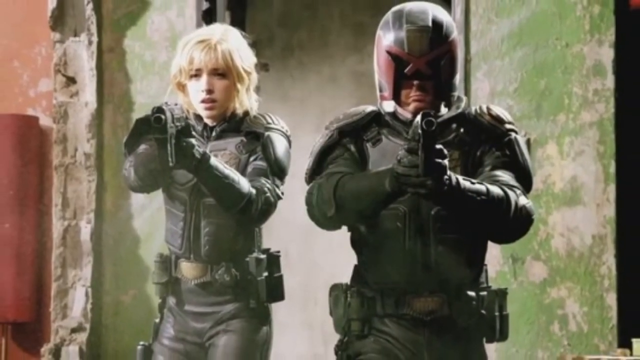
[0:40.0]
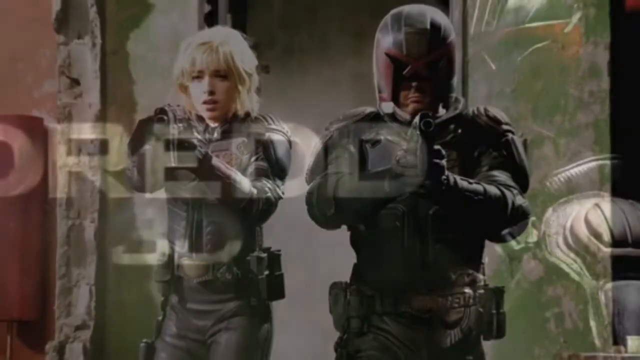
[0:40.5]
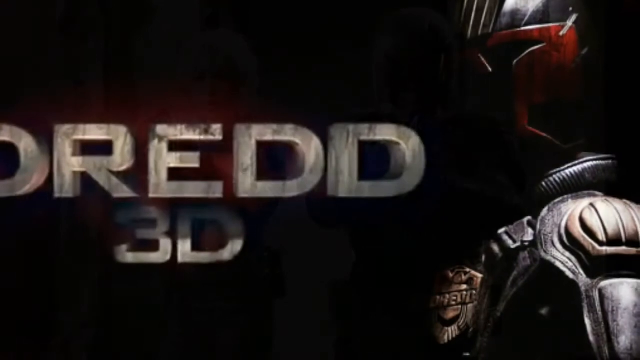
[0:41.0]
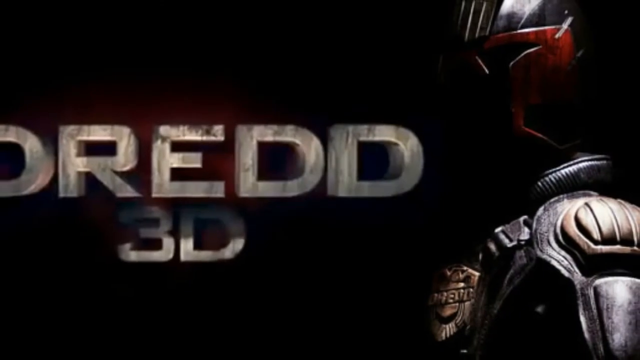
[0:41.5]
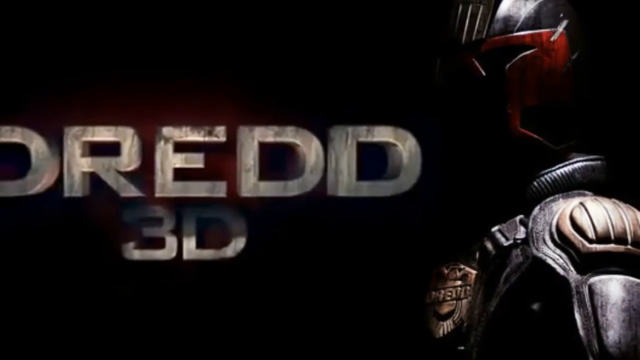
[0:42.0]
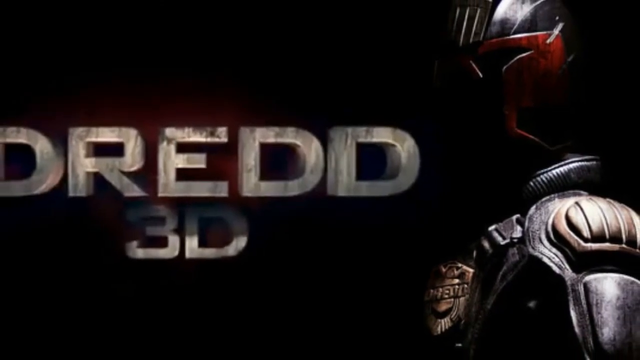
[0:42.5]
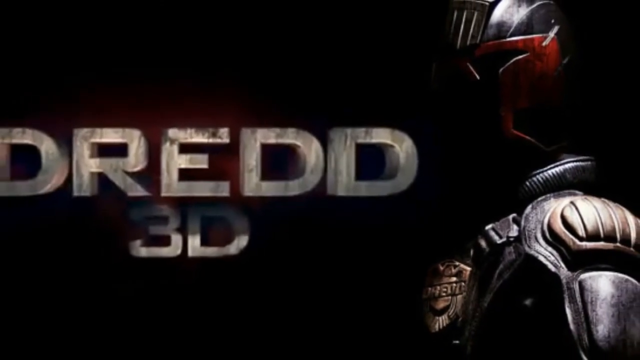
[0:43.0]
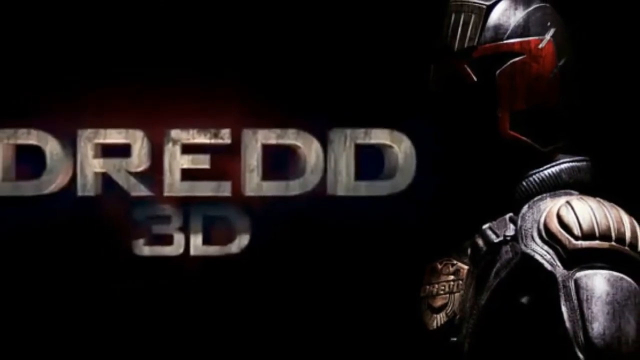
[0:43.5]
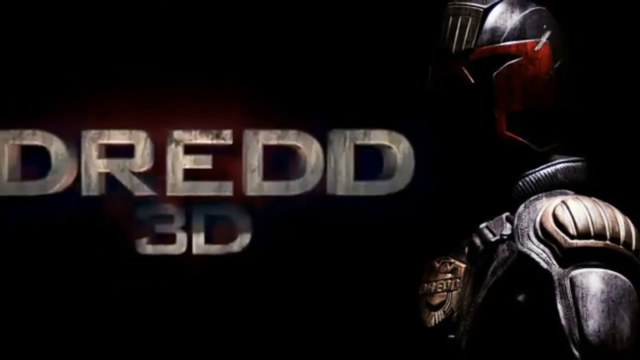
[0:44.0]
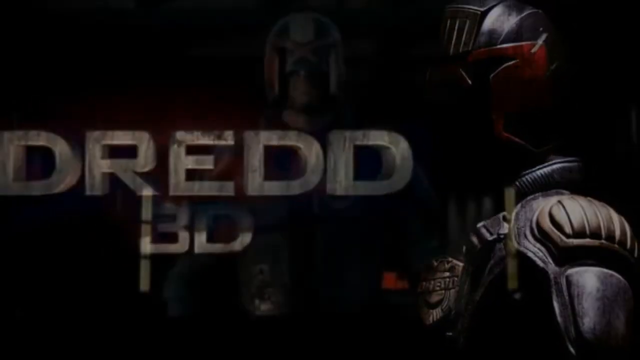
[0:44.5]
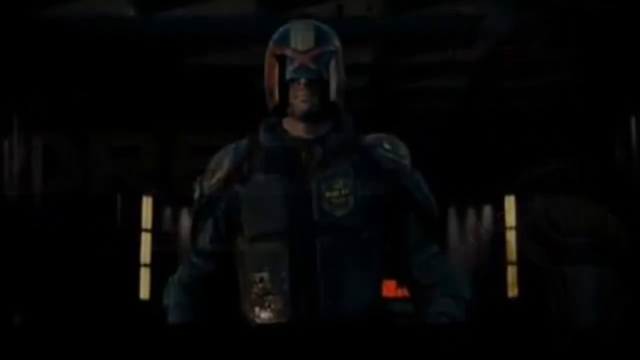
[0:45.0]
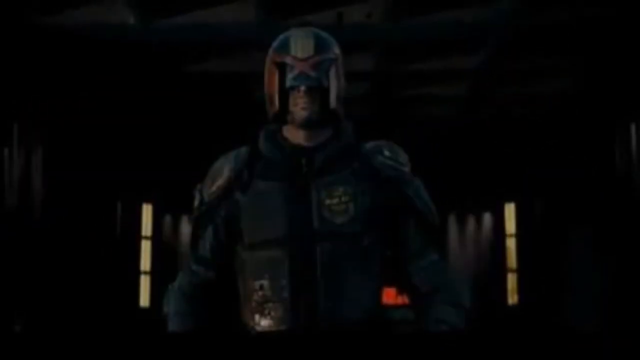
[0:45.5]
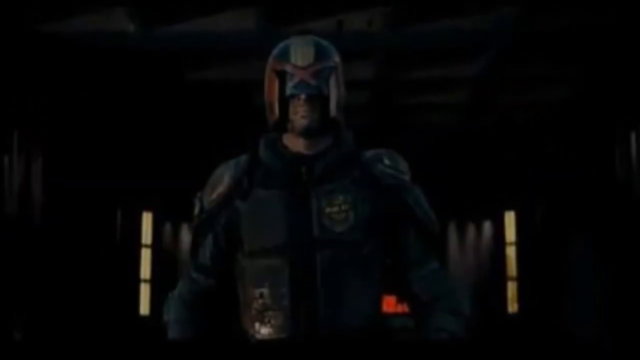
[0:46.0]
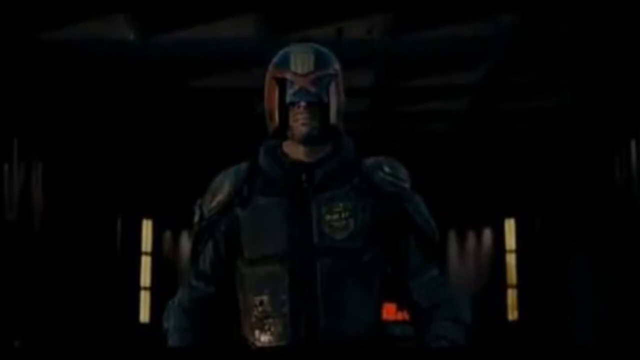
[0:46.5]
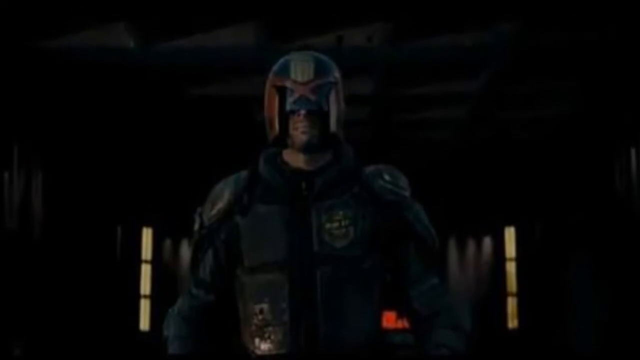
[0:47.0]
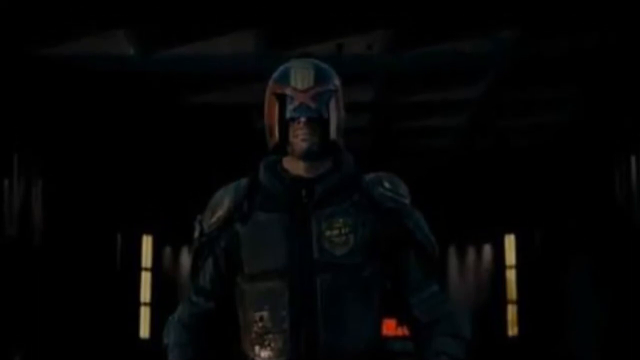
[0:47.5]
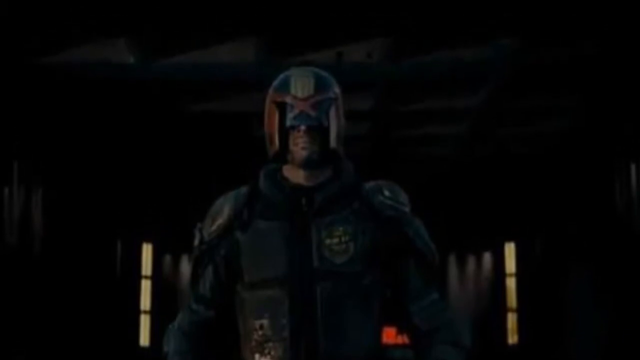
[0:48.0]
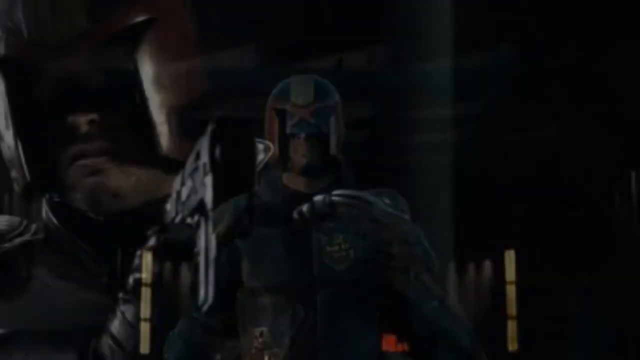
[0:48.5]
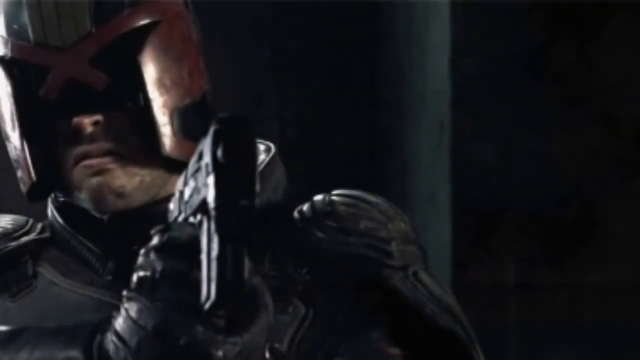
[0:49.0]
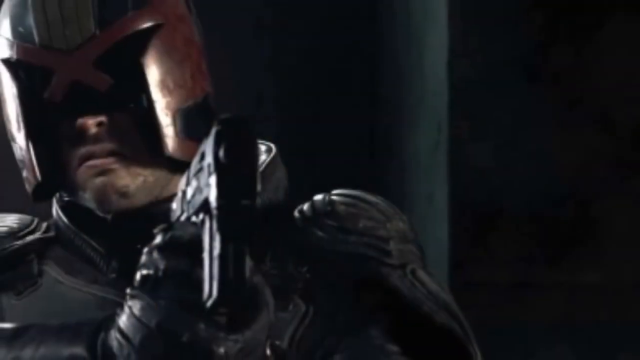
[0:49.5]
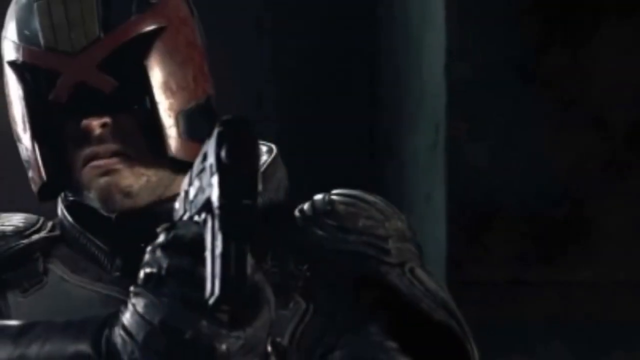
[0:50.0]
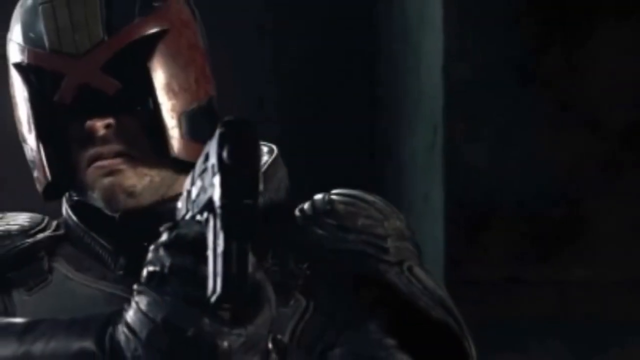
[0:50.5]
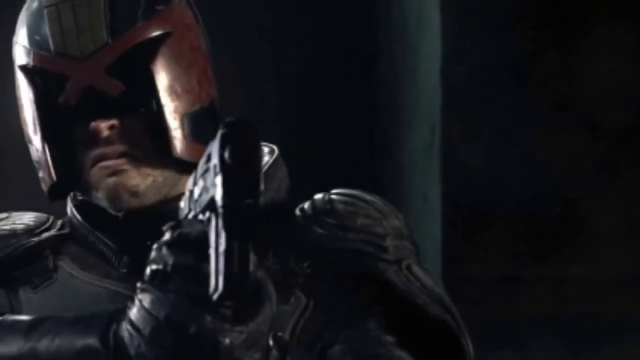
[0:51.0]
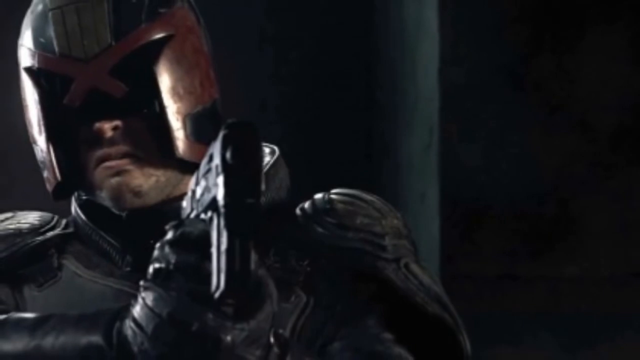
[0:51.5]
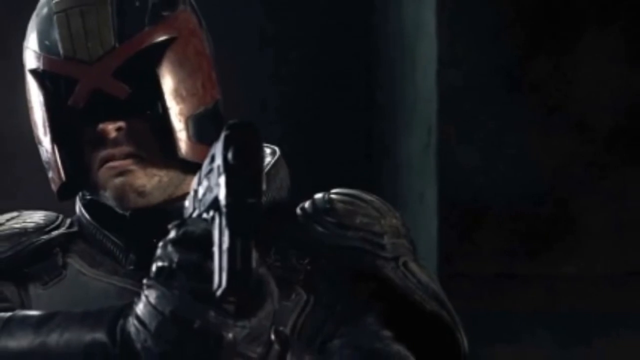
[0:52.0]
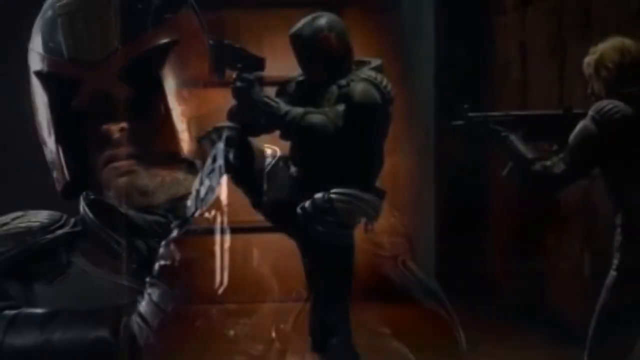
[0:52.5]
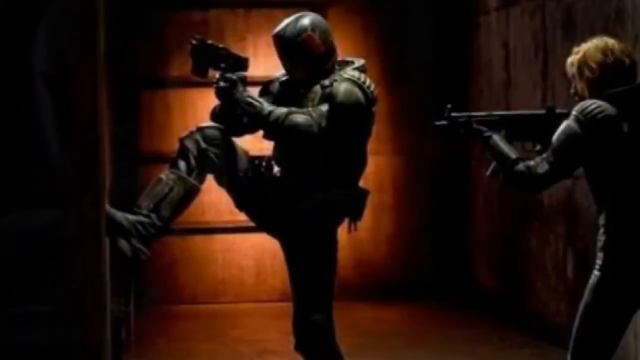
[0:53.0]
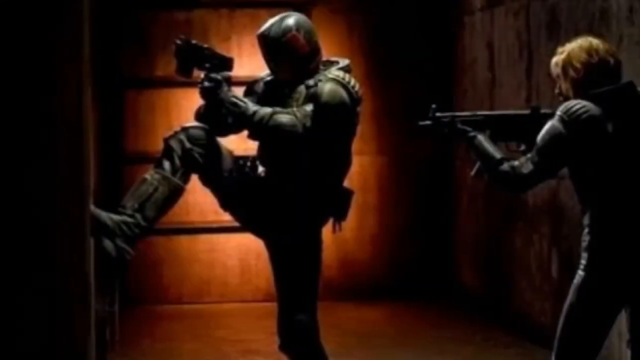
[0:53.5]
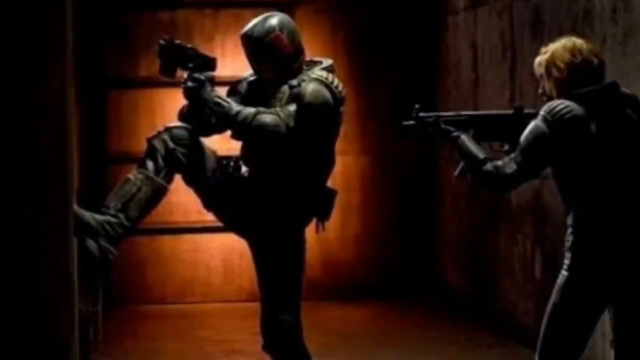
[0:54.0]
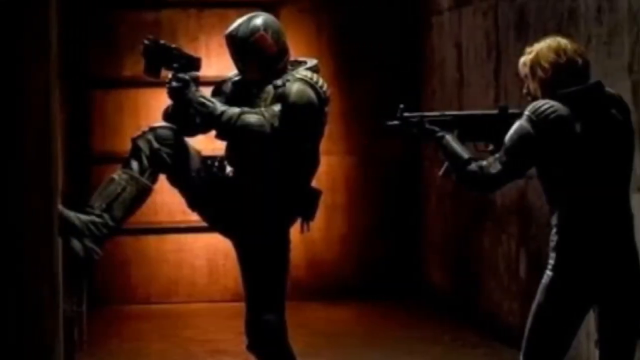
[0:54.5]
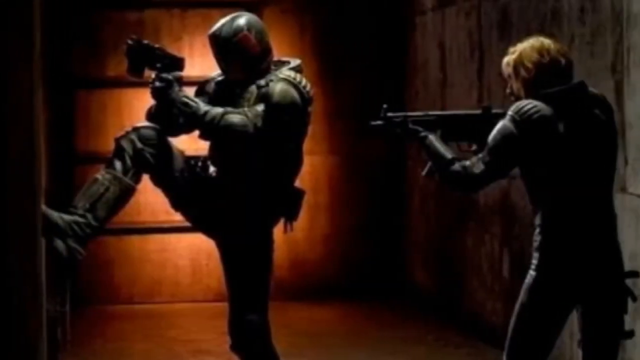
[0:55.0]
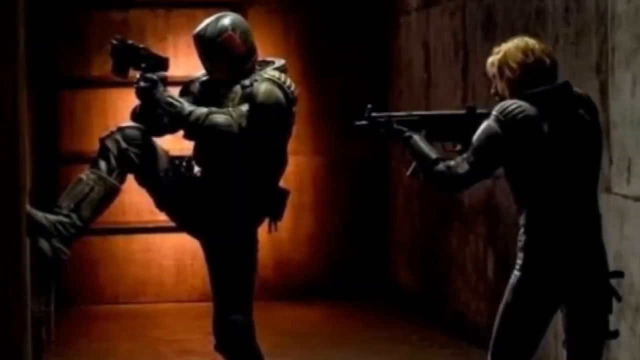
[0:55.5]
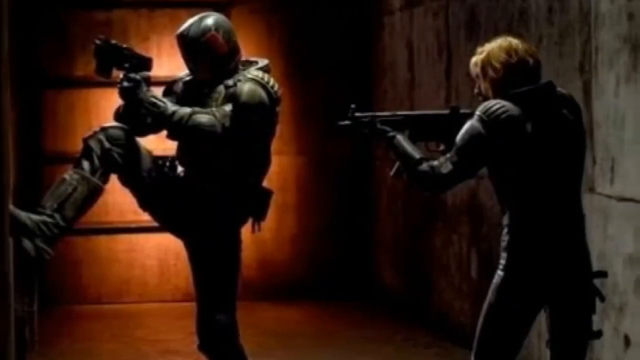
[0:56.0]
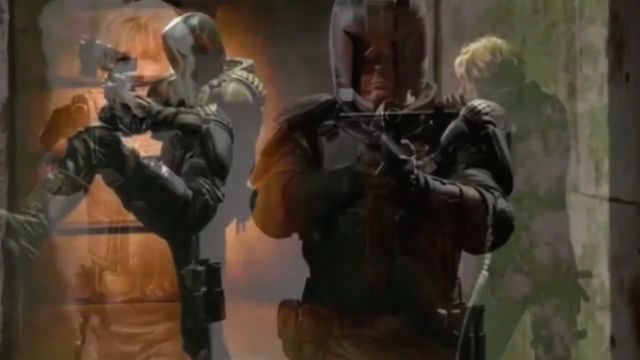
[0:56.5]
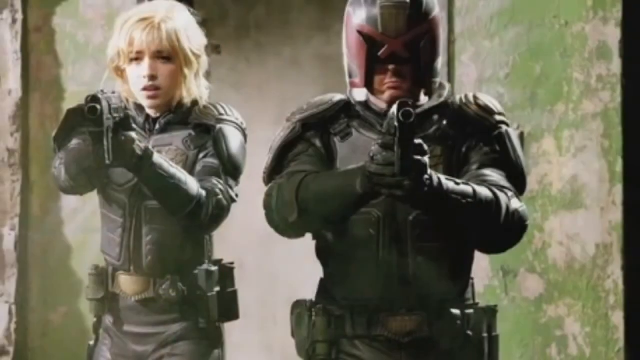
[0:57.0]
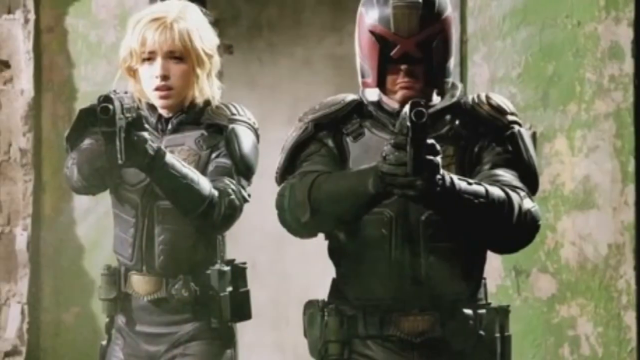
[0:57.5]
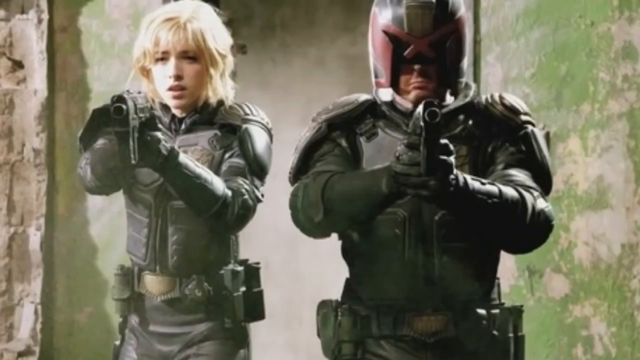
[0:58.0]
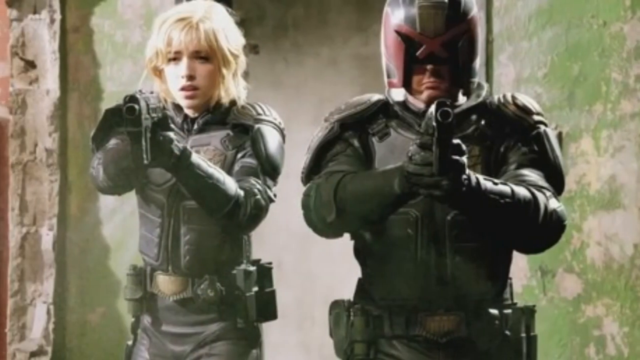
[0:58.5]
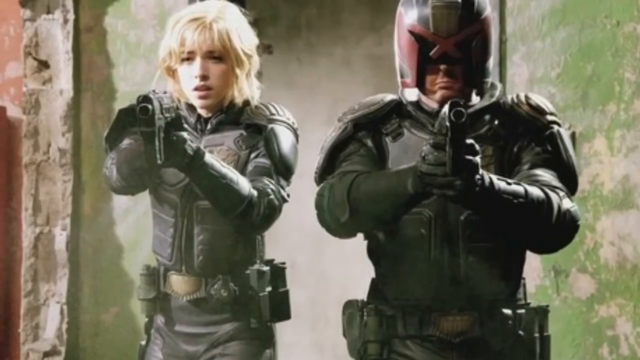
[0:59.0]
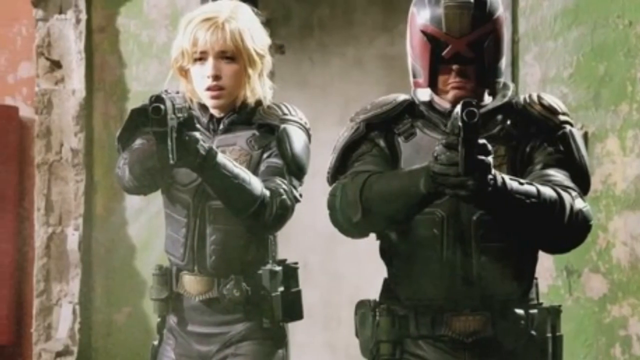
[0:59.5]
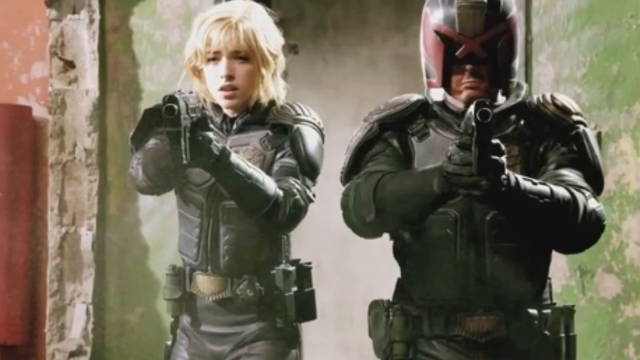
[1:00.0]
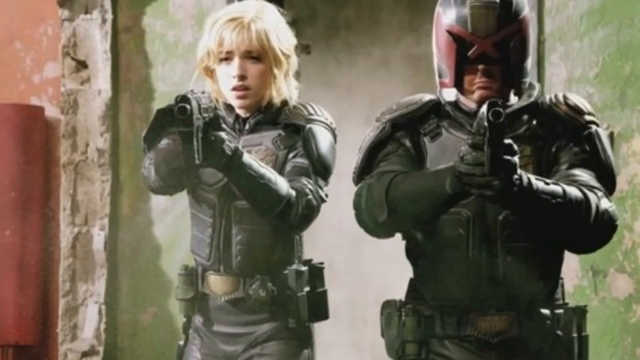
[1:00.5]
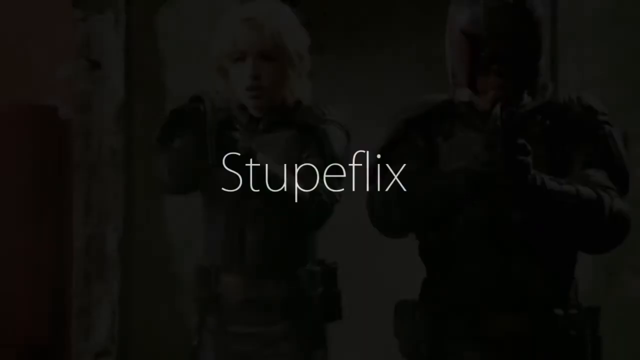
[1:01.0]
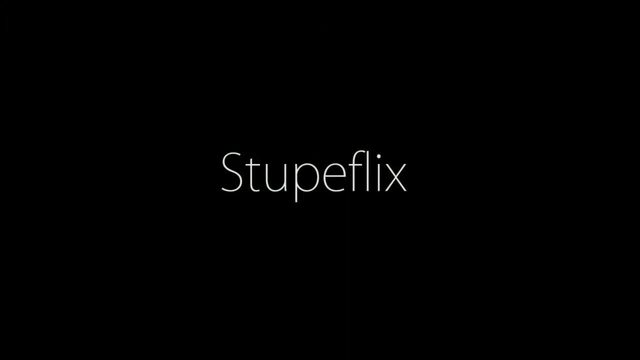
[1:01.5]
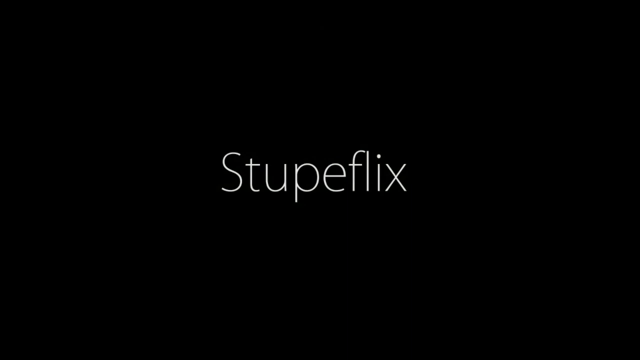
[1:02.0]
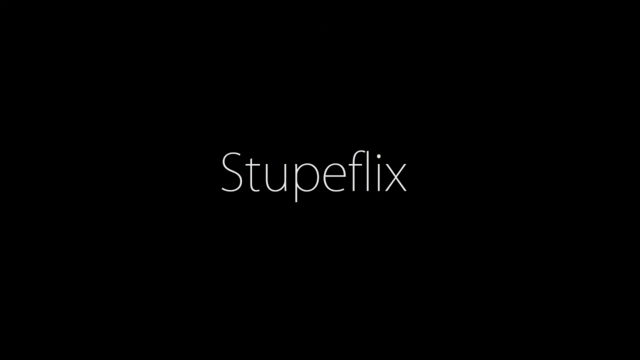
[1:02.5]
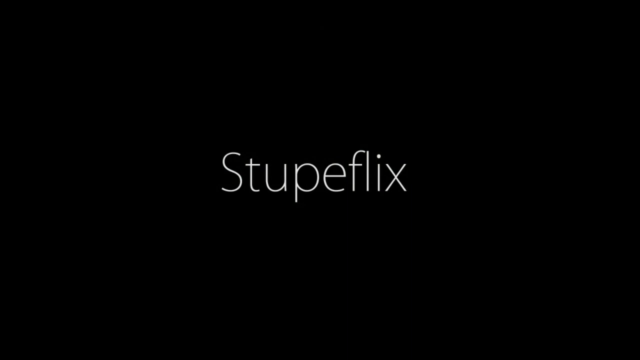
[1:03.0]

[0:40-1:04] More images, from either a movie or a game, show the man and the woman holding guns and moving forward as if going somewhere to attack. They do not seem close to the enemy yet. The man lifts his leg as if trying to open a door to get in and attack, while the woman stands behind him, apparently waiting to shoot.